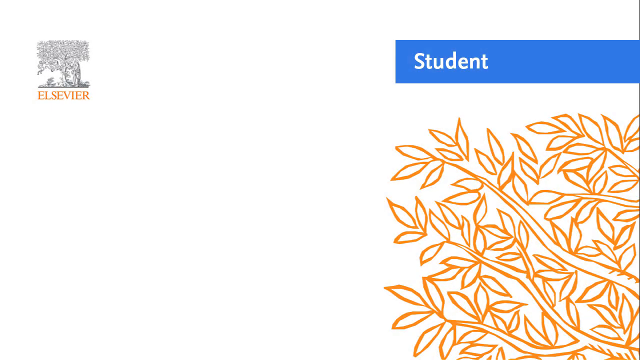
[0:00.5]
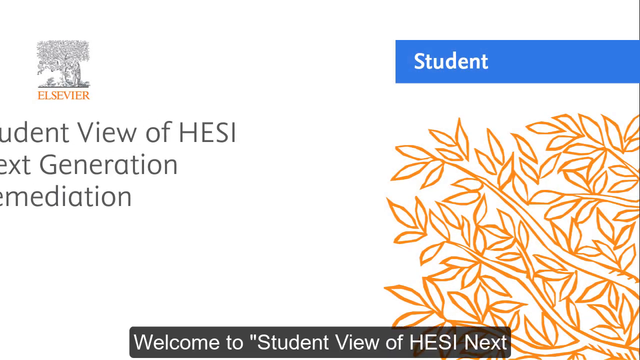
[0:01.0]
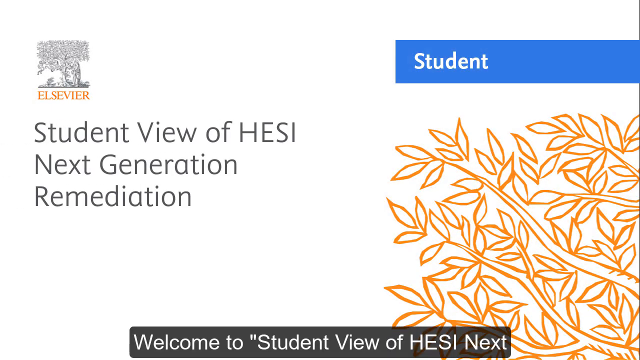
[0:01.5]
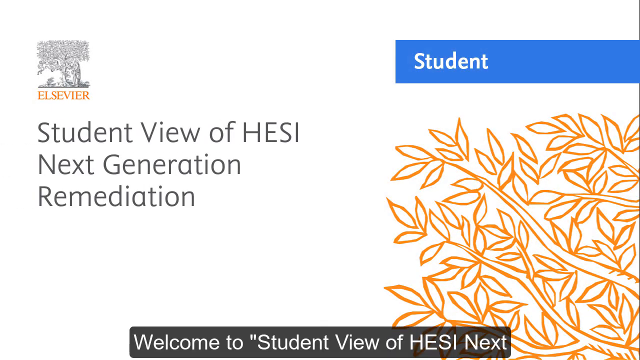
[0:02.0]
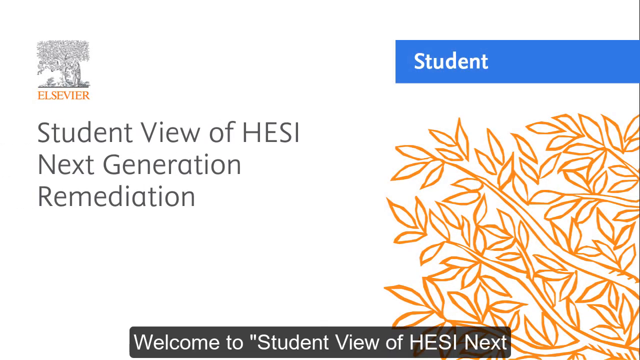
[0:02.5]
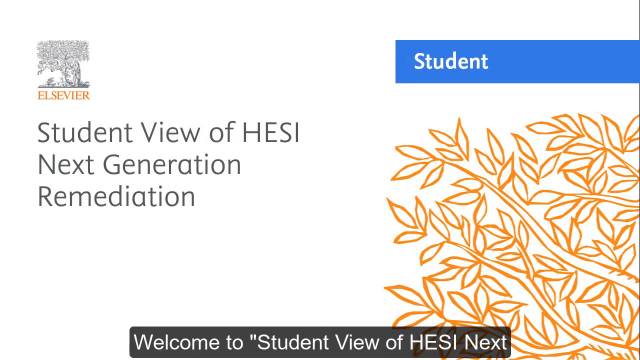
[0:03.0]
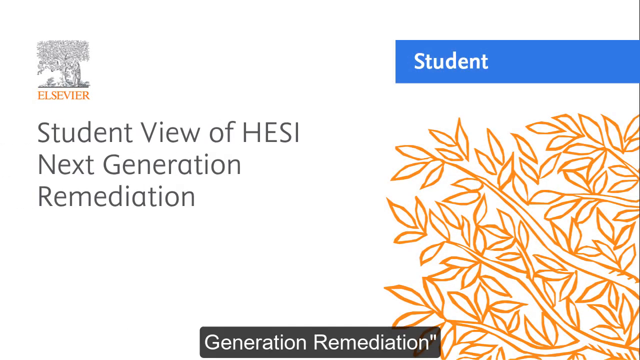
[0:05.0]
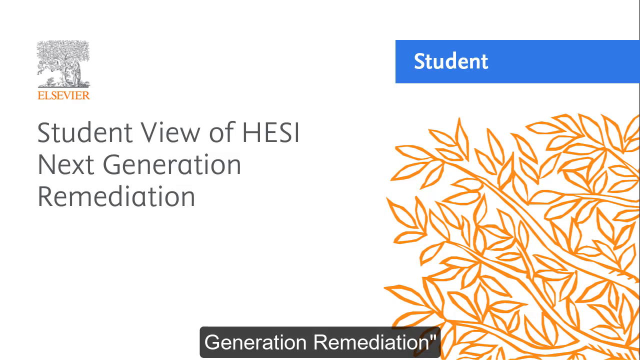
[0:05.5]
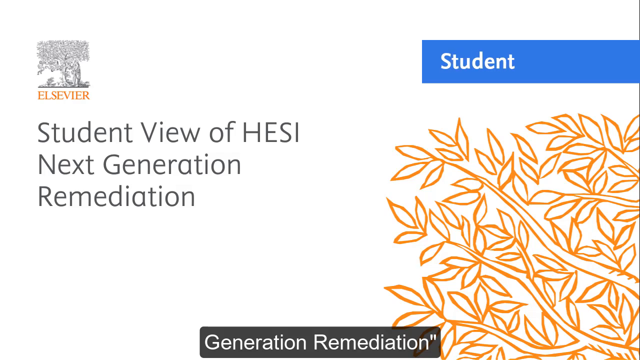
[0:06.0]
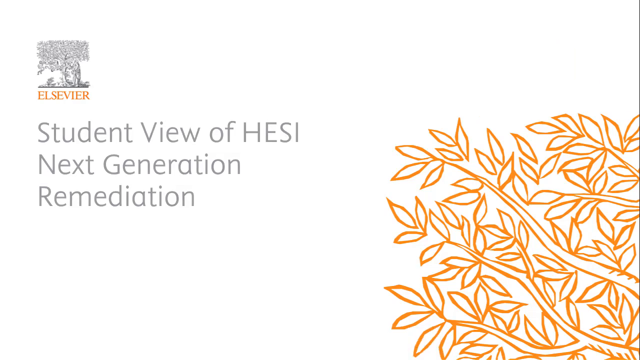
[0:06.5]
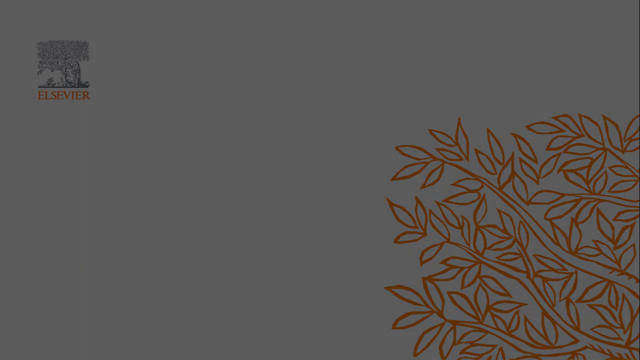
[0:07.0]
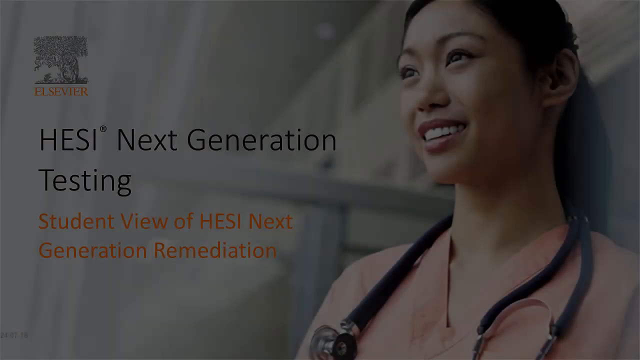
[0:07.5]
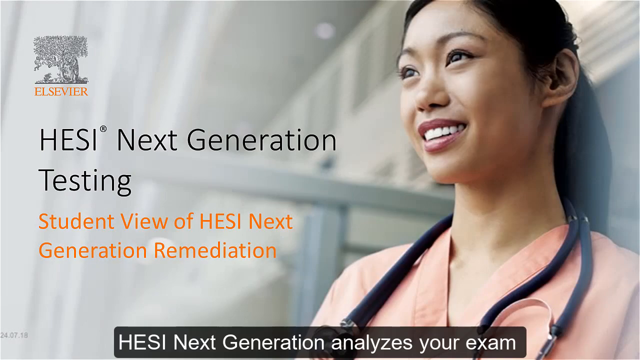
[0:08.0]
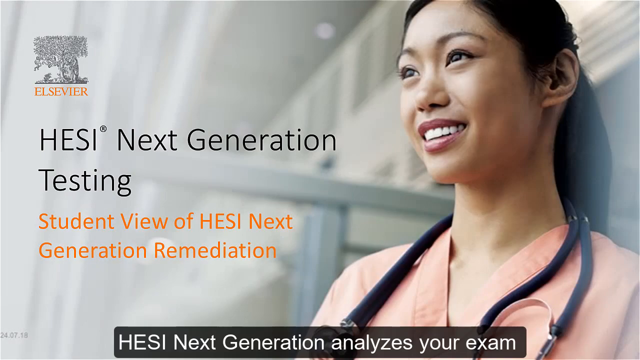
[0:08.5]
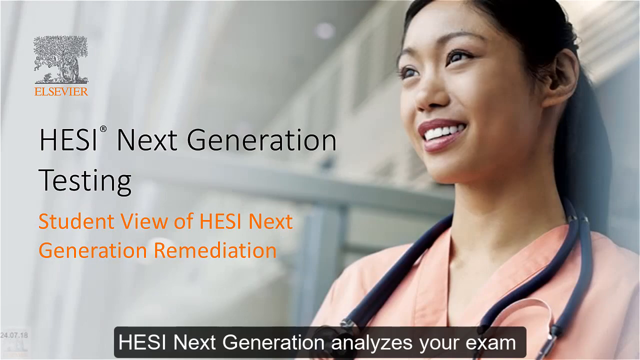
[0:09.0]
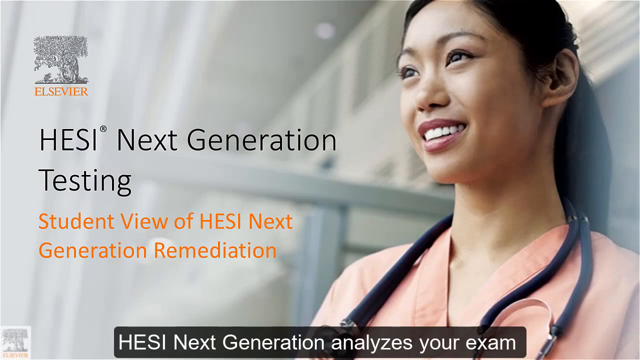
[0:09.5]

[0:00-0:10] An opening title reads "Student view of H.E.S.I. Next Generation Remediation," along with "Elsevier" and "Student." Text then reads "Welcome to the student view of HESI Next Generation Remedial" and "Student view of HESI Next Generation analyses your exam Remediation." An image shows a student wearing a blush medical coat, smiling; only her side view is visible.